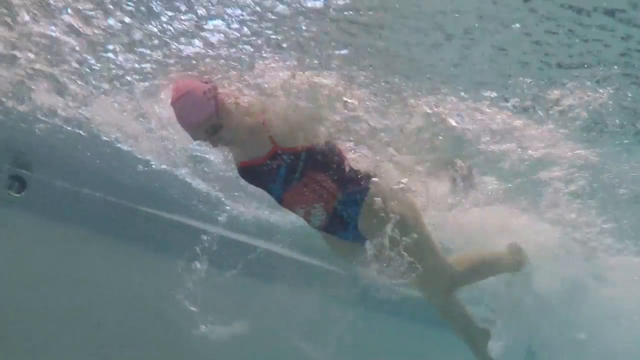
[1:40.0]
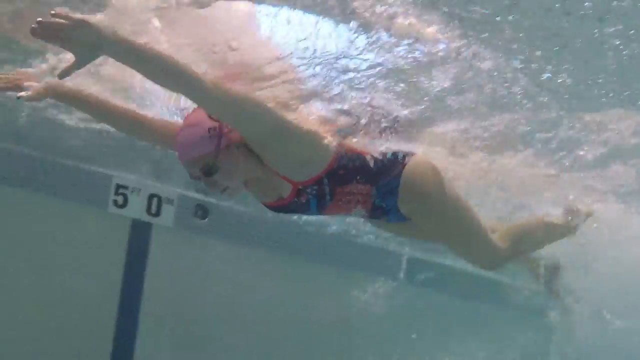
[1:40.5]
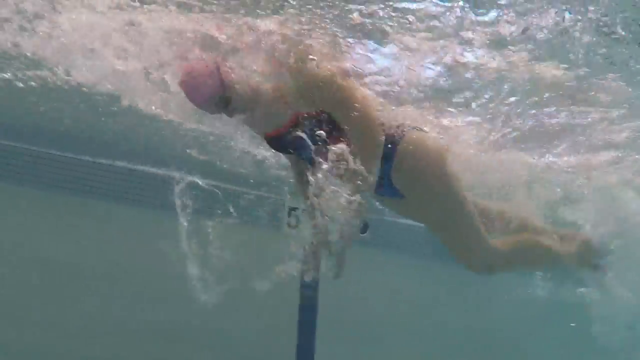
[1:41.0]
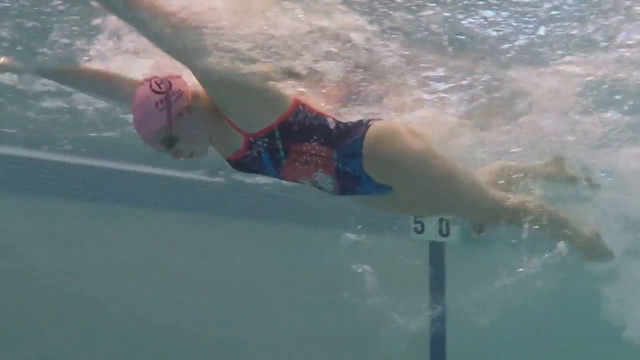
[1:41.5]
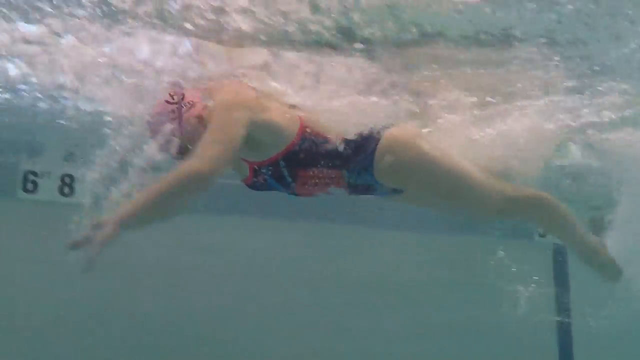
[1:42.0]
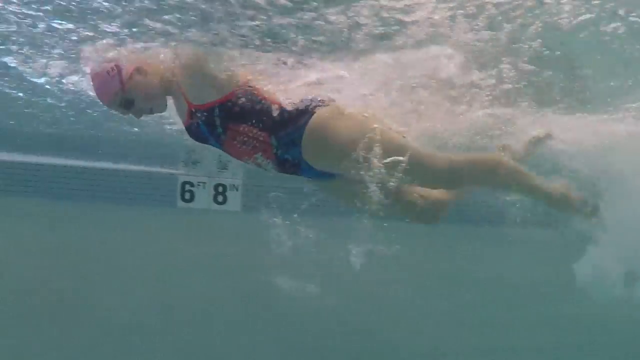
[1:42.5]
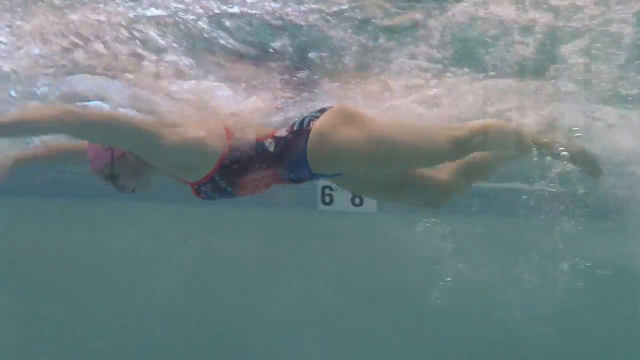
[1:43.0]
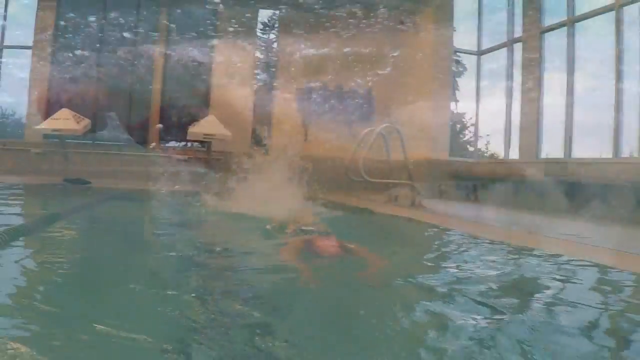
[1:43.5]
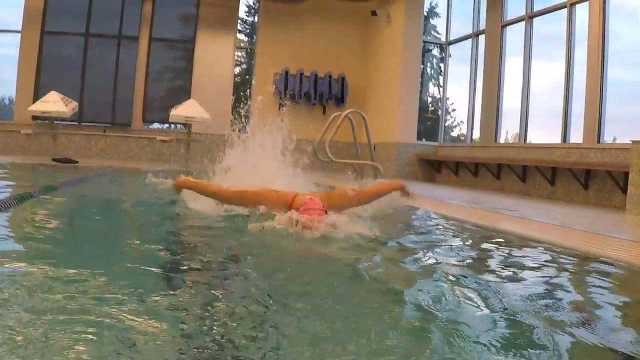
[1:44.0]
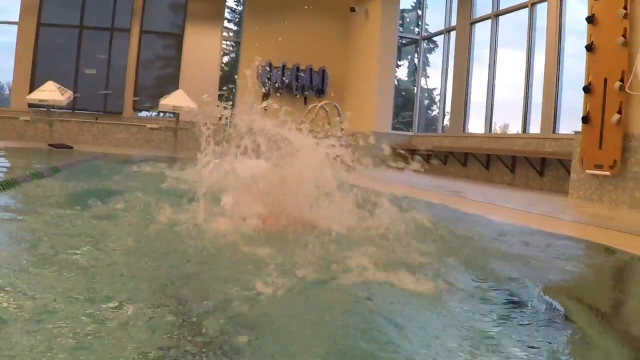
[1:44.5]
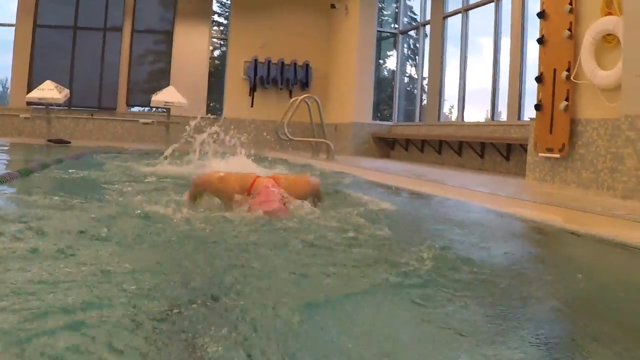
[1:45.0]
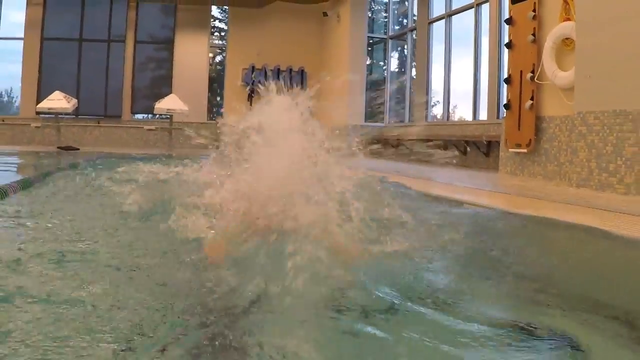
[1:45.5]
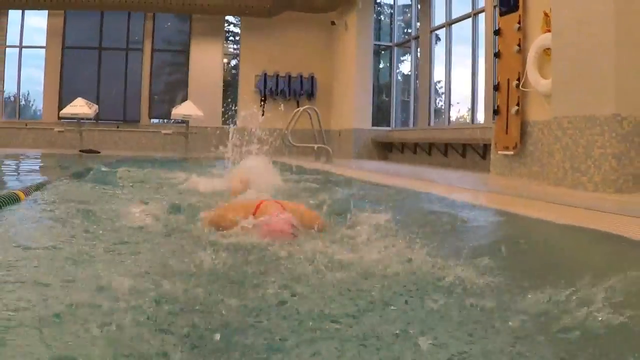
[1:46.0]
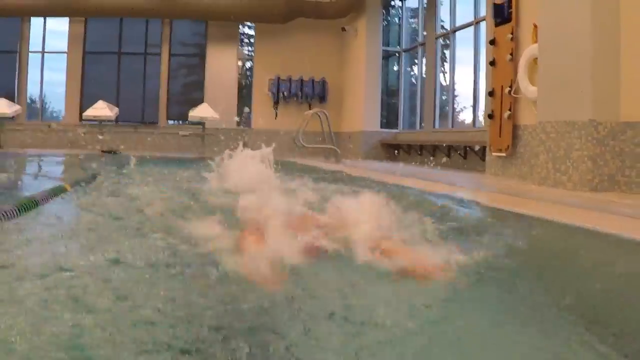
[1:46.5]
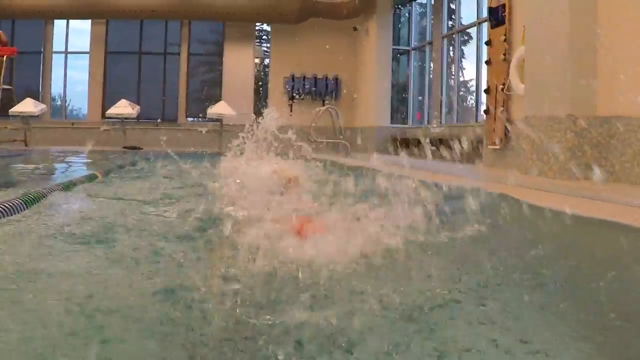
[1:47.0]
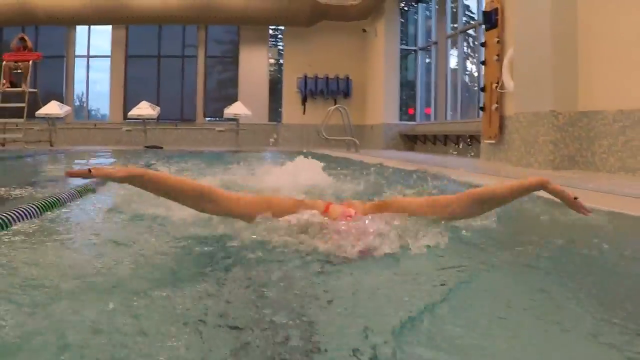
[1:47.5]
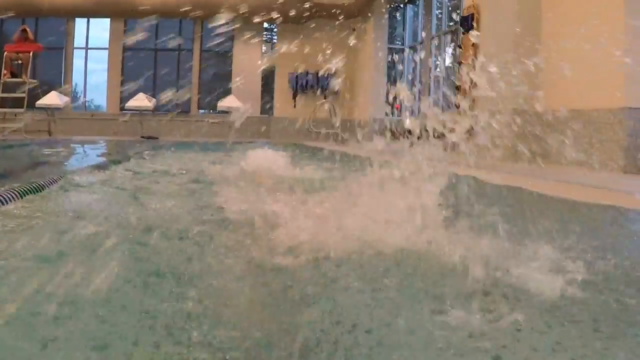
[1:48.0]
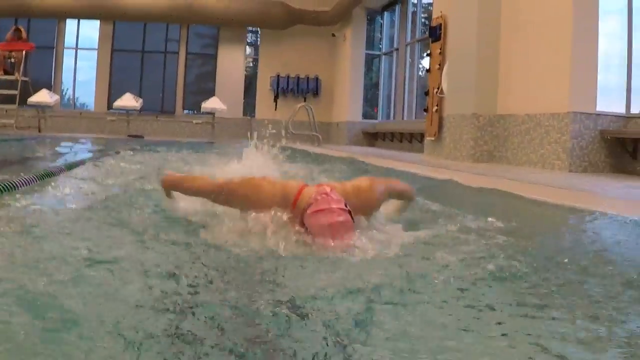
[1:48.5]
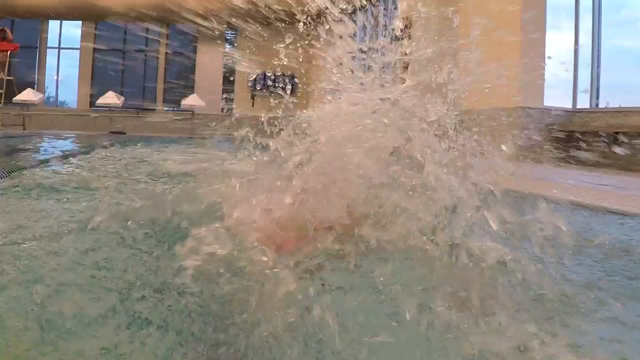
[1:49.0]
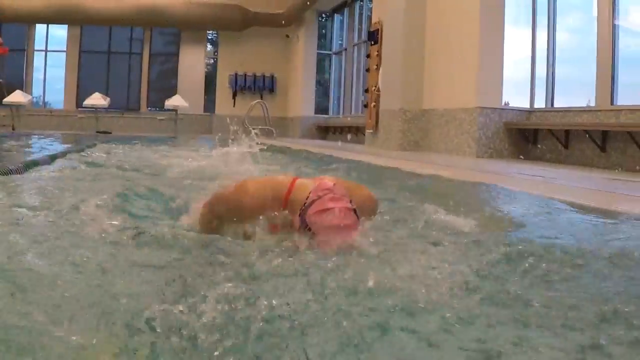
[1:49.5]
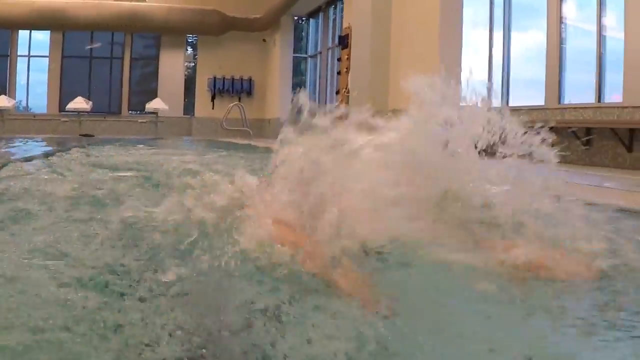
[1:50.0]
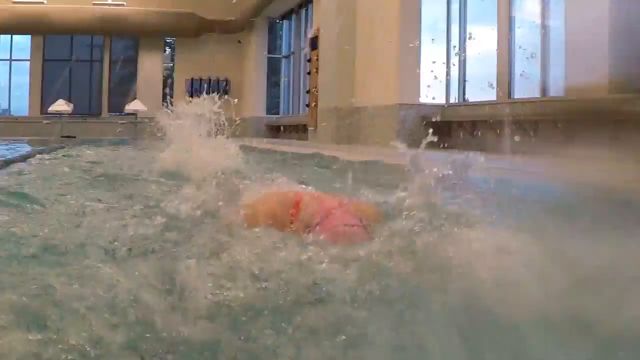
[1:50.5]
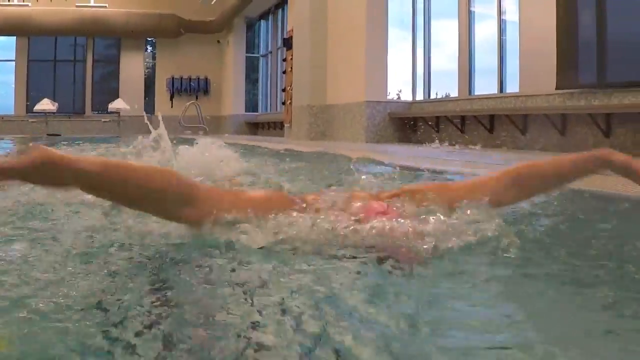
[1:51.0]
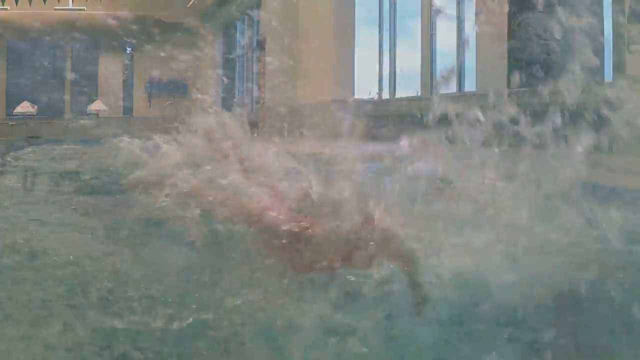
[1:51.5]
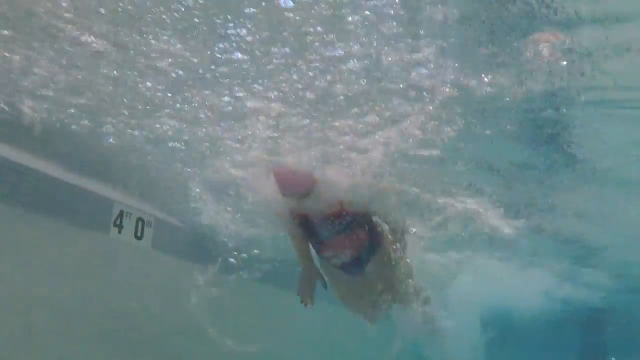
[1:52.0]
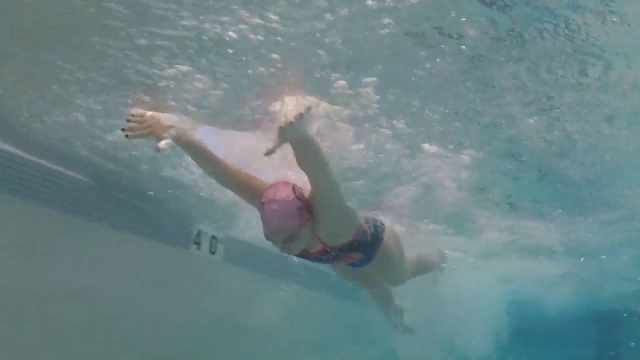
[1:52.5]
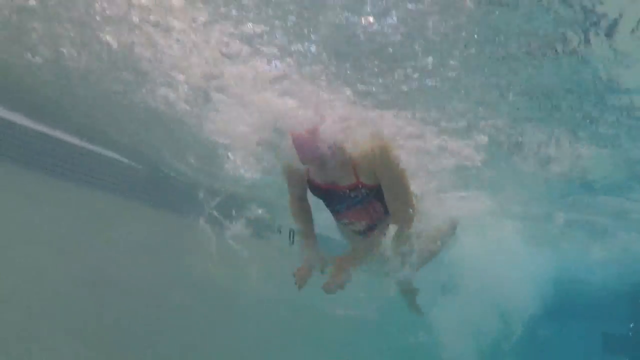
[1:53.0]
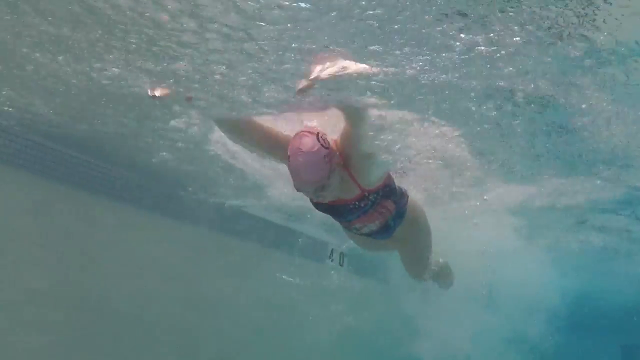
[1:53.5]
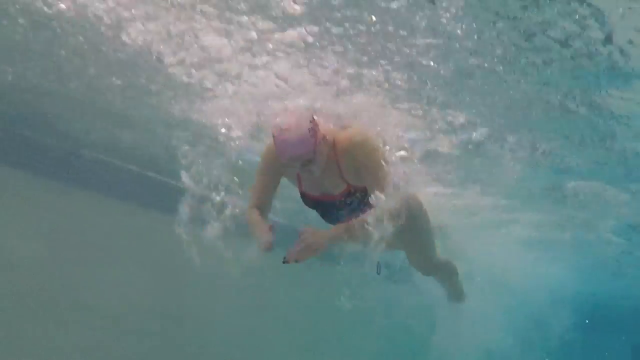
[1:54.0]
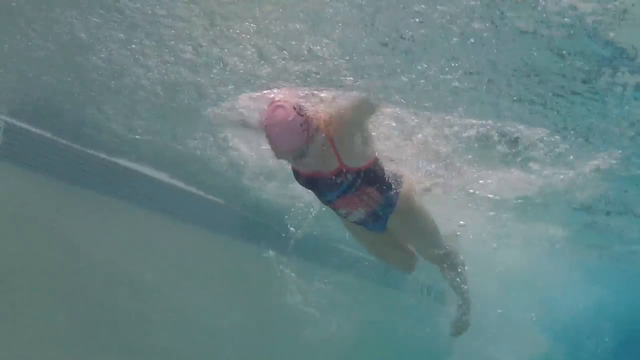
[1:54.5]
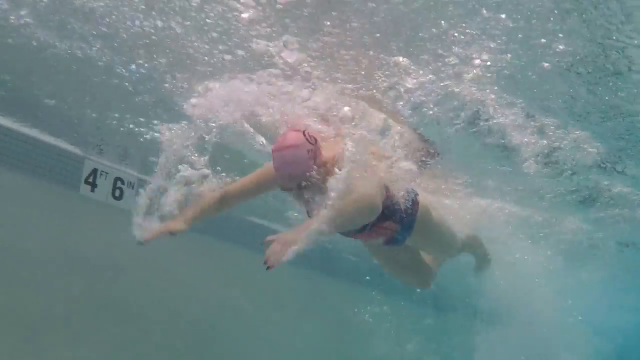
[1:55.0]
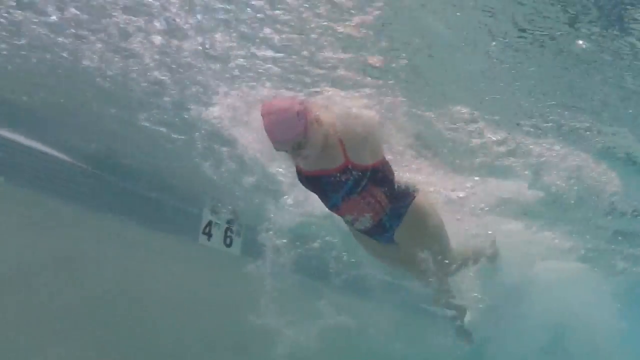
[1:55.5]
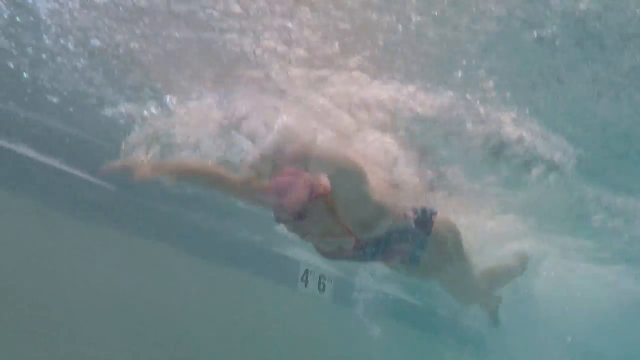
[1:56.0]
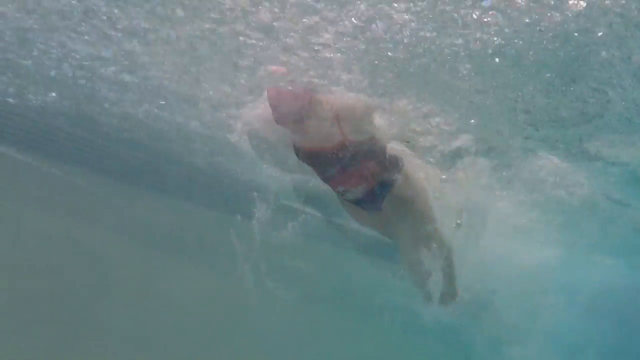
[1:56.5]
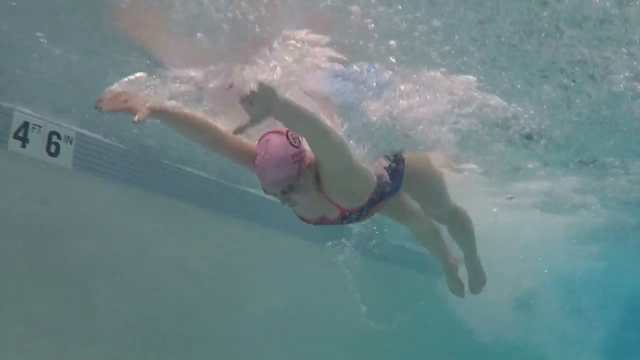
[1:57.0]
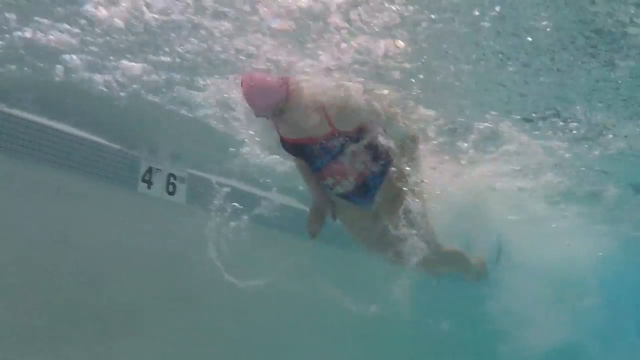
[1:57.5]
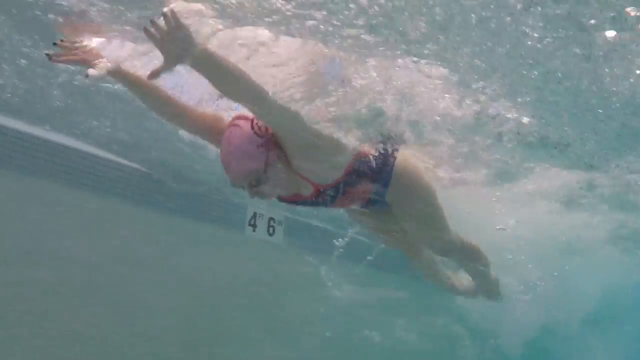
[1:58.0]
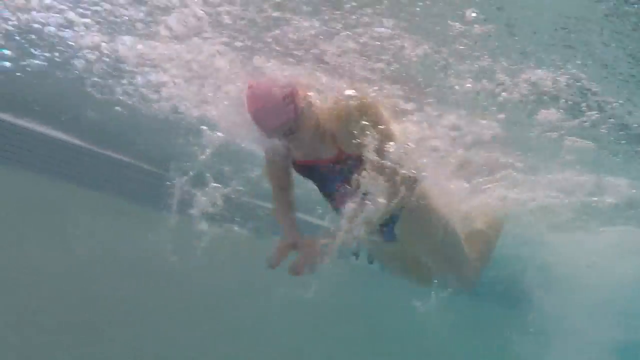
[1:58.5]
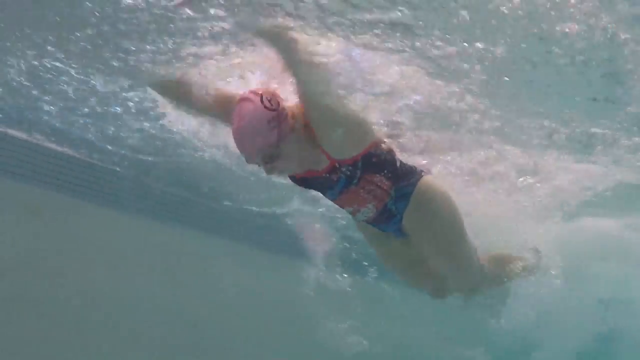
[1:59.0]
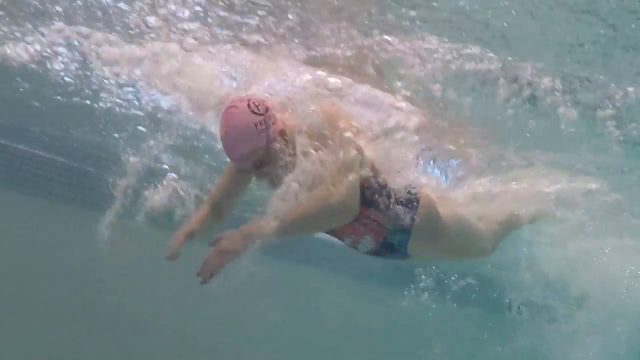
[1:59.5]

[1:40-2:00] The woman is in the pool in a pink swim cap and black goggles, showing the butterfly stroke from the front, apparently still with a kickboard between her thighs so she is not using them. She then does the butterfly stroke using a freestyle kicking motion with her feet, so she does not do the usual wormy butterfly movement. She holds her breath for a long time. A number on the side of the pool shows she is in four feet six inch deep water. The water is pretty clear, and the pool is indoors.